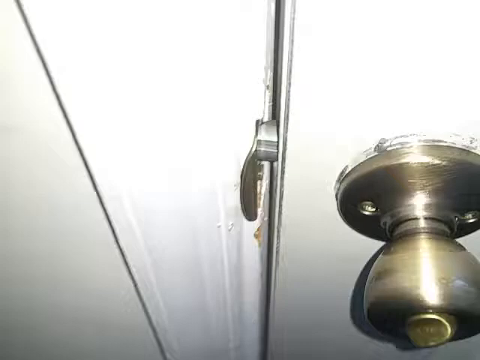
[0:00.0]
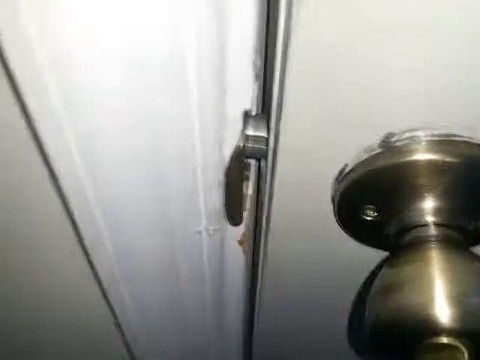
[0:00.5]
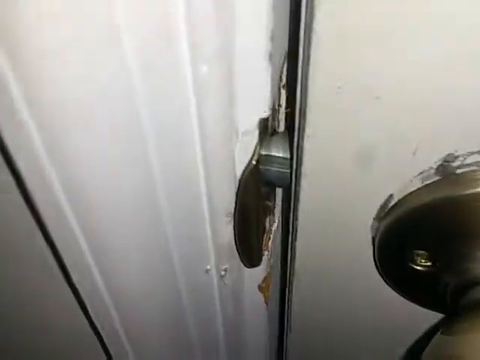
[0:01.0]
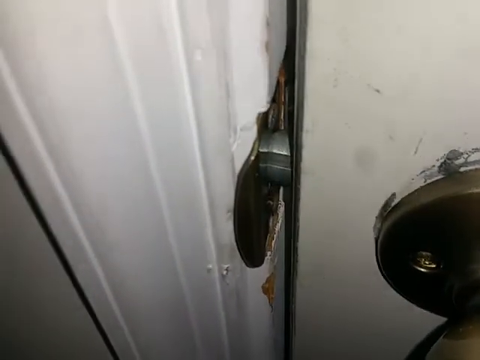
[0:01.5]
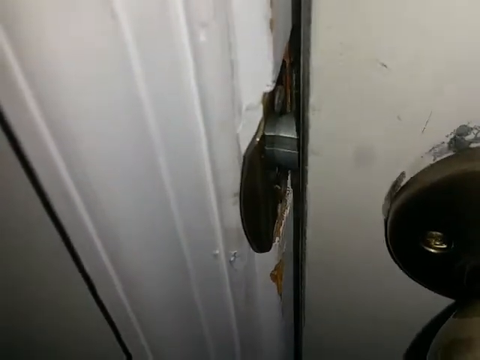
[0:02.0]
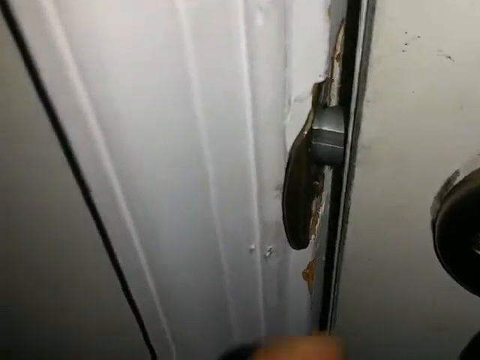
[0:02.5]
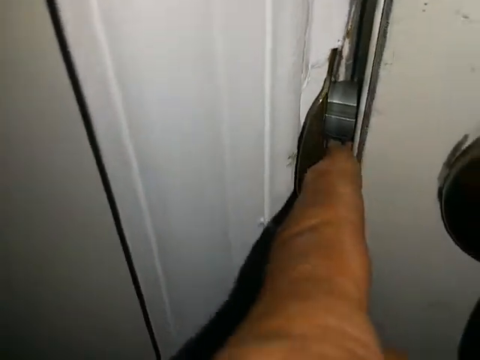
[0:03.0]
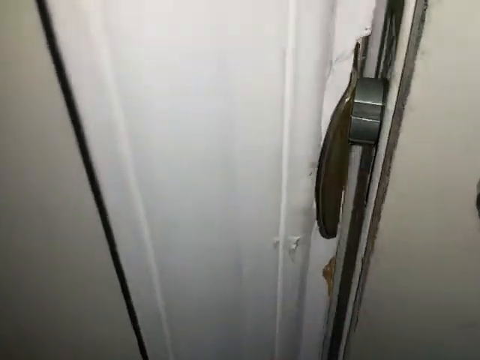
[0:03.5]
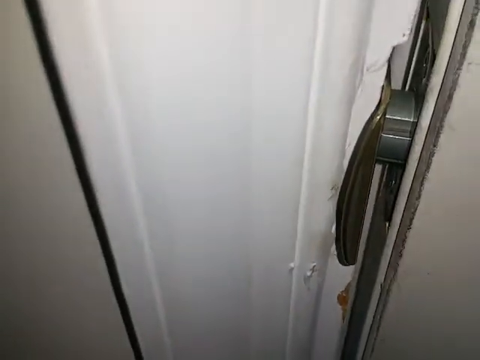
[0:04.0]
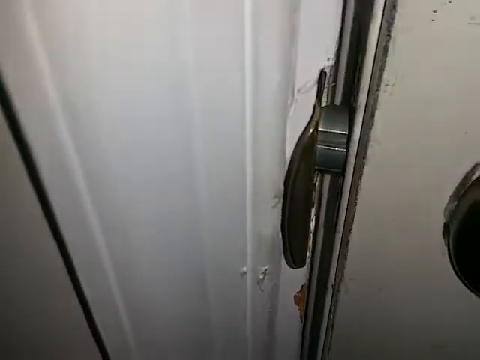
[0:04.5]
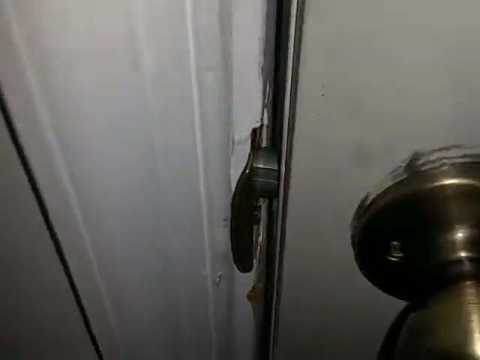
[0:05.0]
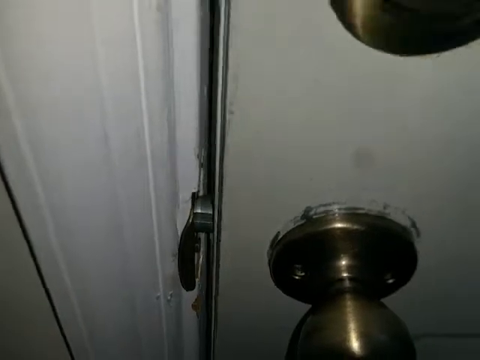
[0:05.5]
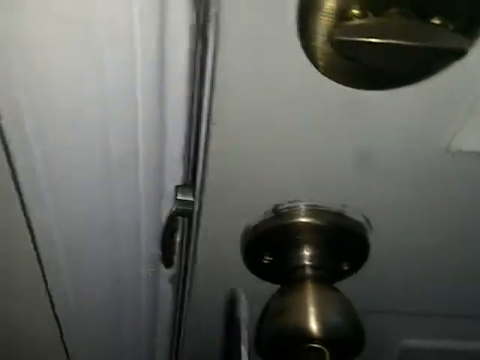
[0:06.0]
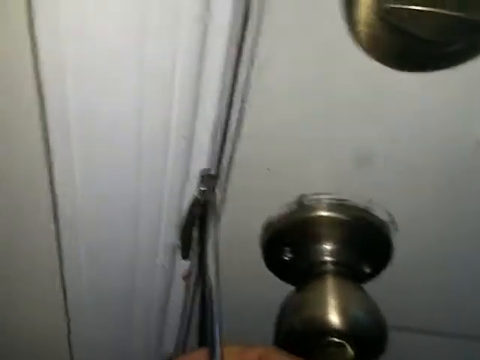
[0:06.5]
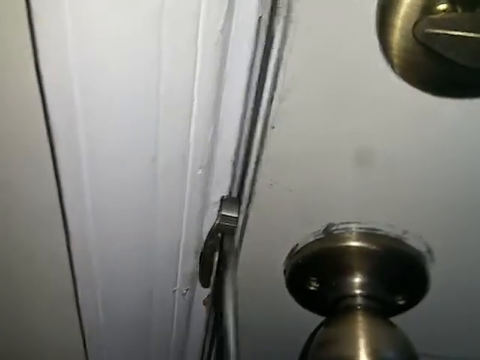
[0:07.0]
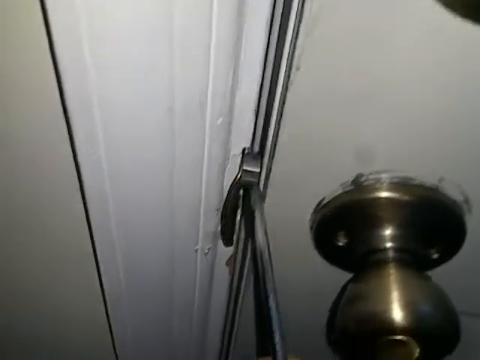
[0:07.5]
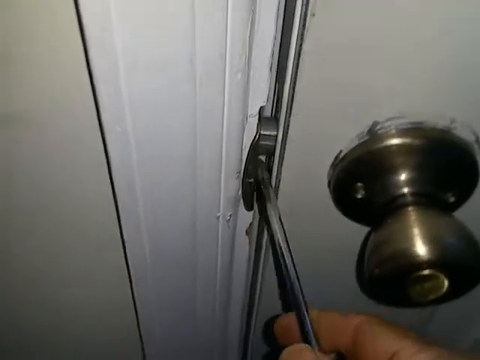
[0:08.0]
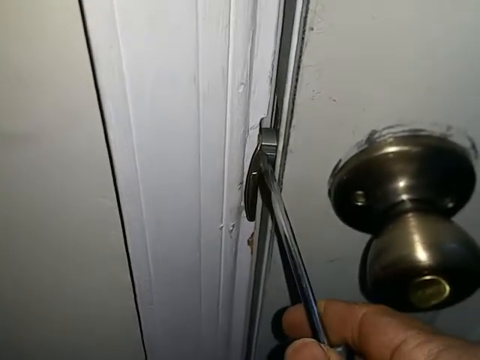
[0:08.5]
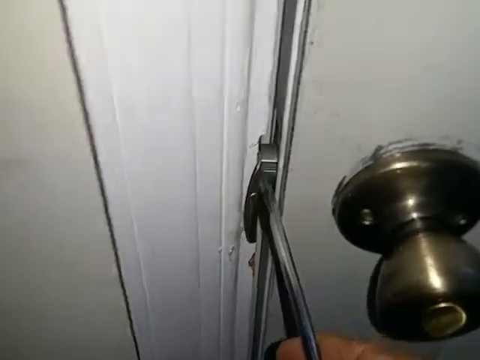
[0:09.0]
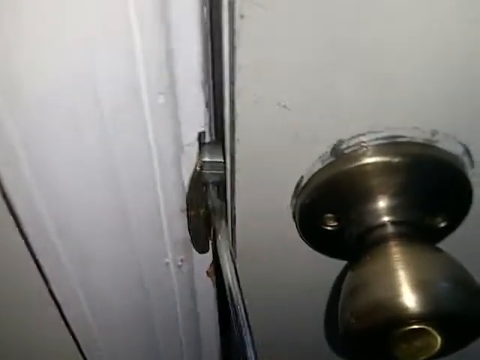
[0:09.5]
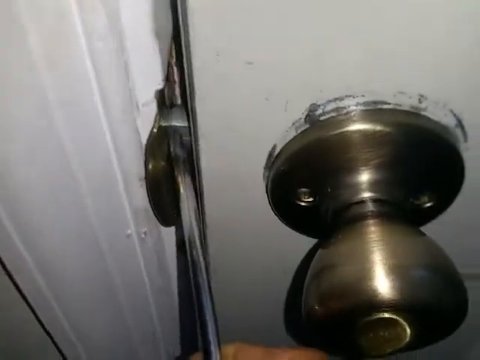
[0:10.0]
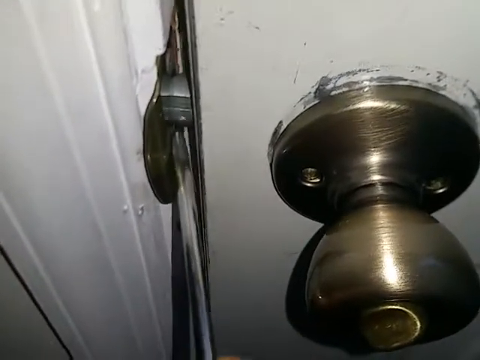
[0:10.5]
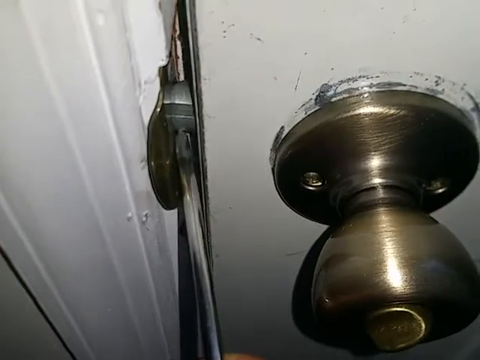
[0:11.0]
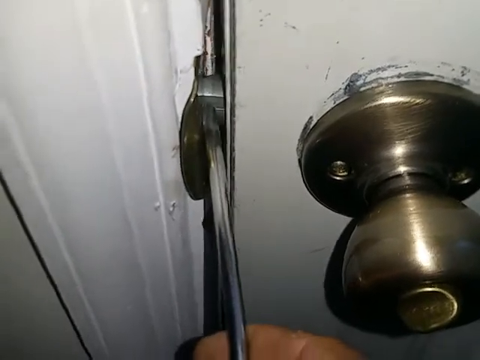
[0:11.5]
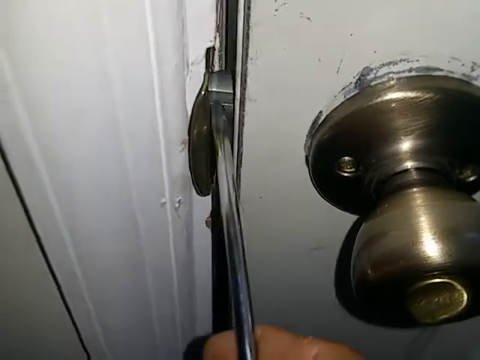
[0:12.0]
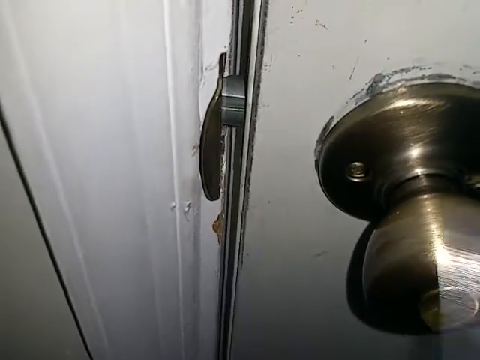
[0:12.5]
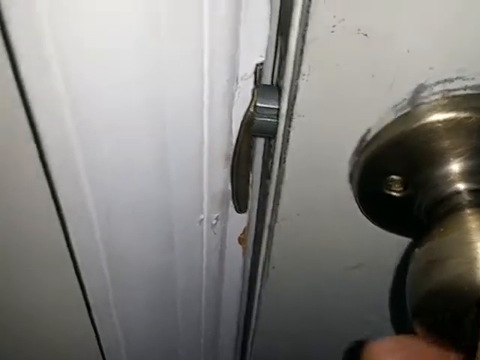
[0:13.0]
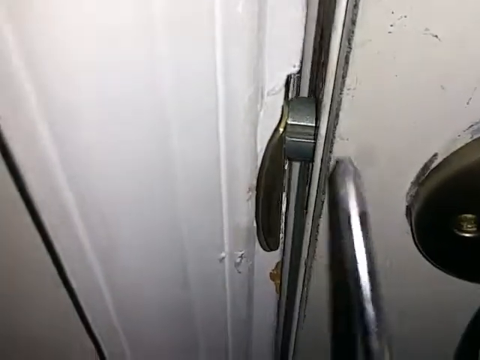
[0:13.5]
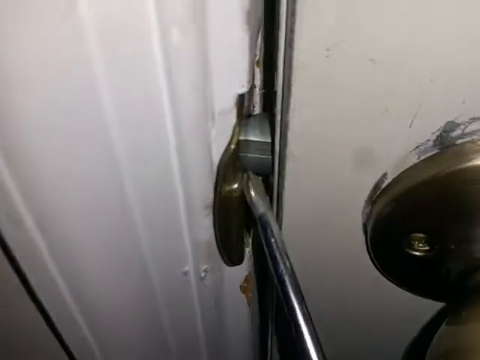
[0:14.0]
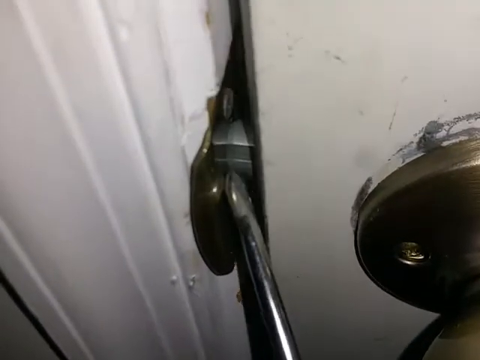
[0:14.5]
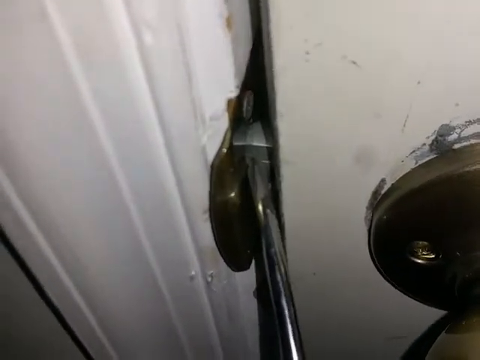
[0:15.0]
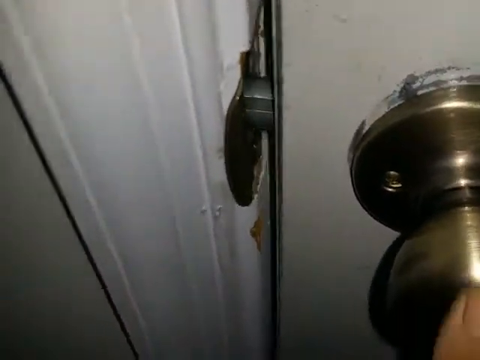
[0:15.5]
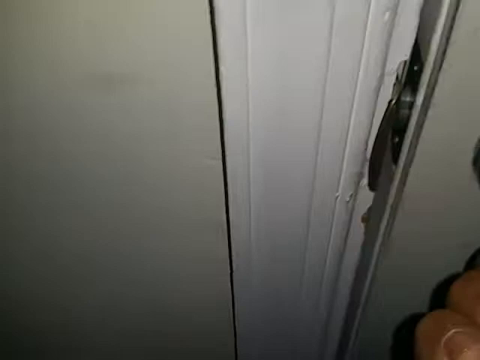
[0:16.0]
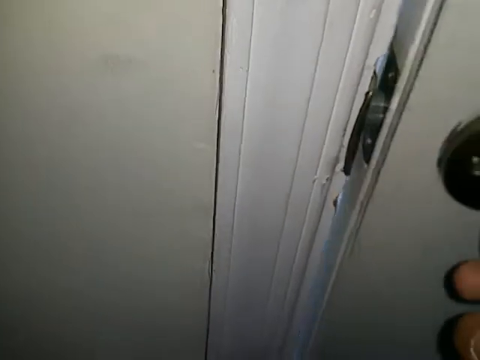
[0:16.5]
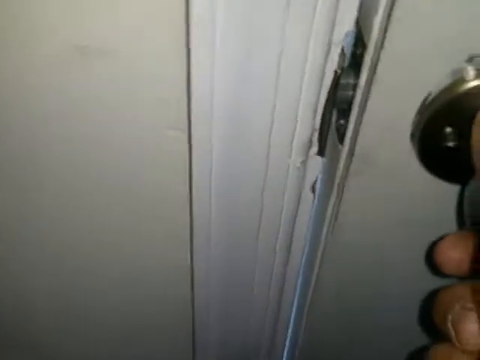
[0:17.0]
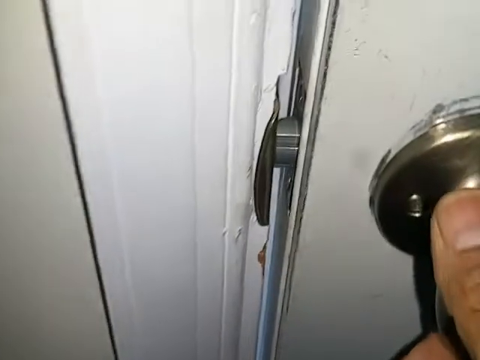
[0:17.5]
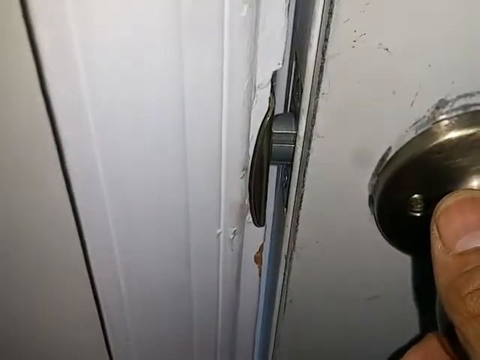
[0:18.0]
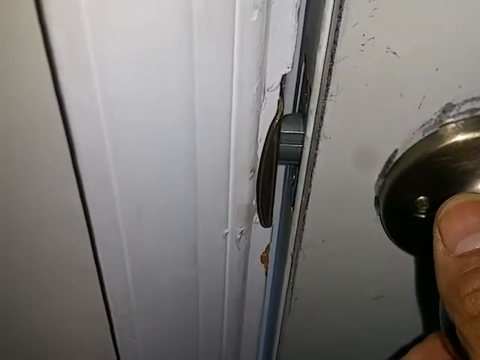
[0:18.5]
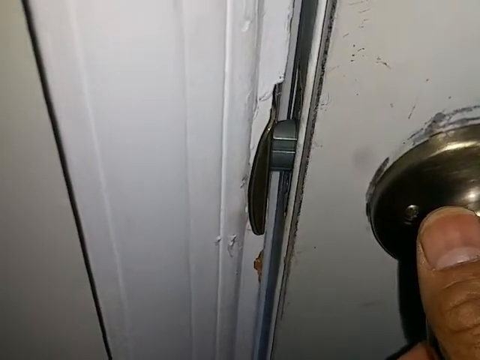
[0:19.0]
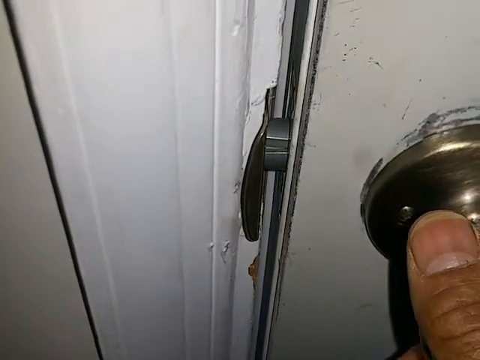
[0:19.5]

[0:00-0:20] A handheld camera shows the strike plate and latch of an interior door, with the door strike plate on the left of the screen and the door on the right. There is a large gap between them, and what appears to be a screwdriver pokes at the latch, pointing toward the large gap between the door and the door frame. The knob is turned and the latch is shown interacting with the strike plate. The white door has a round silver knob, and the silver strike plate is on the left-hand side of the door. There is white molding on the left side of the door, and the door looks quite worn and old. The lighting is quite dark, and an external light is used to light up the scene.